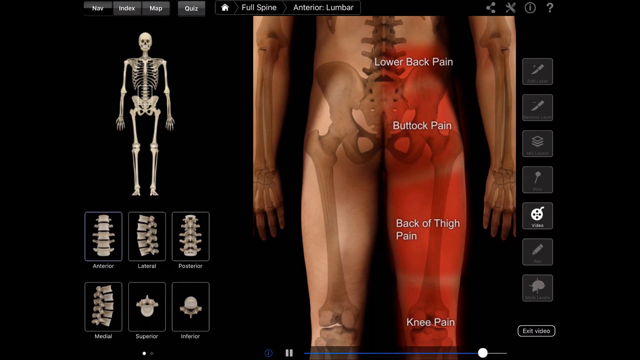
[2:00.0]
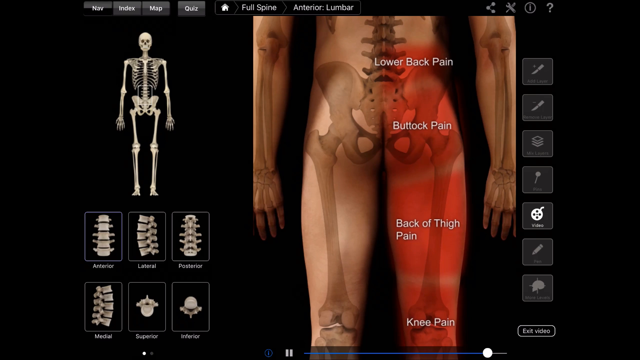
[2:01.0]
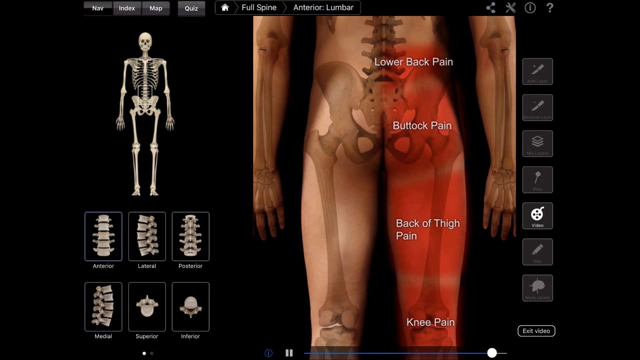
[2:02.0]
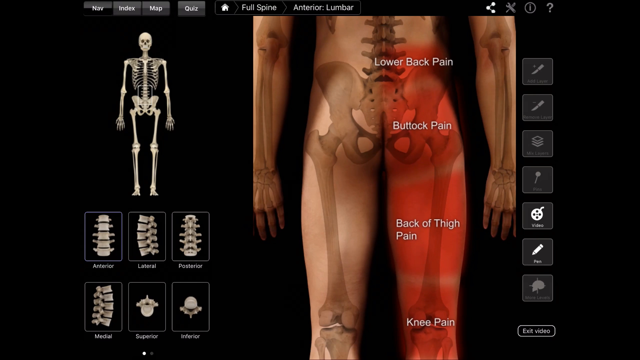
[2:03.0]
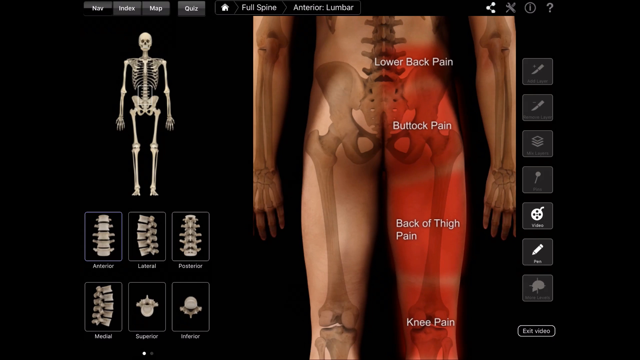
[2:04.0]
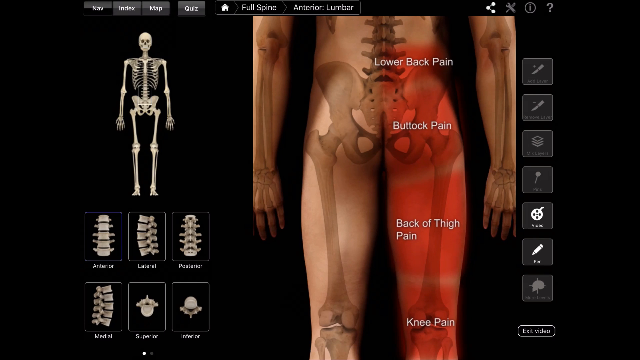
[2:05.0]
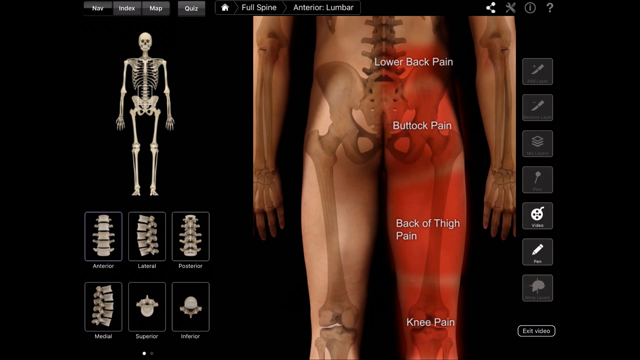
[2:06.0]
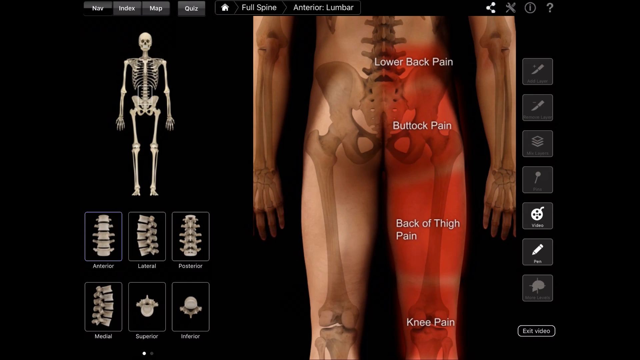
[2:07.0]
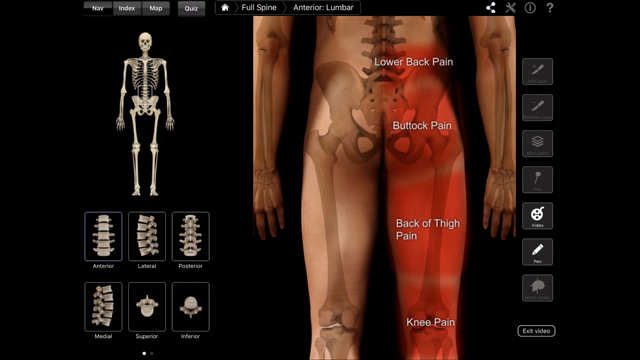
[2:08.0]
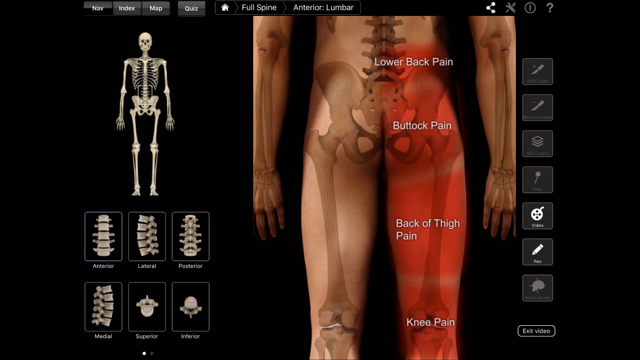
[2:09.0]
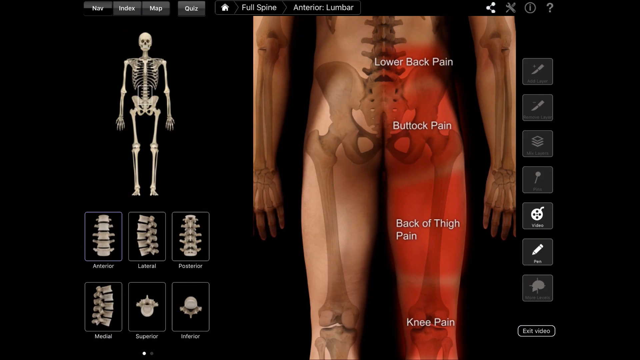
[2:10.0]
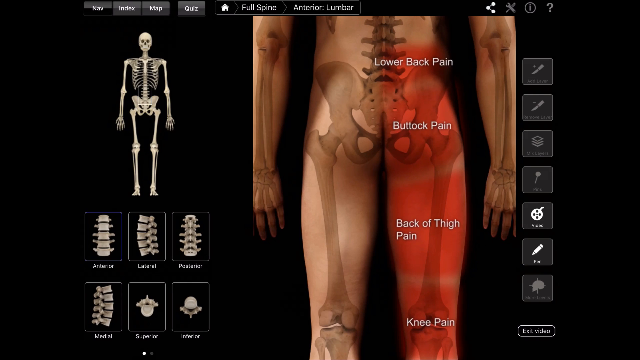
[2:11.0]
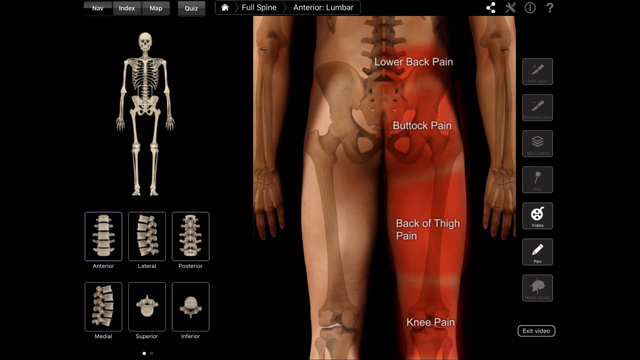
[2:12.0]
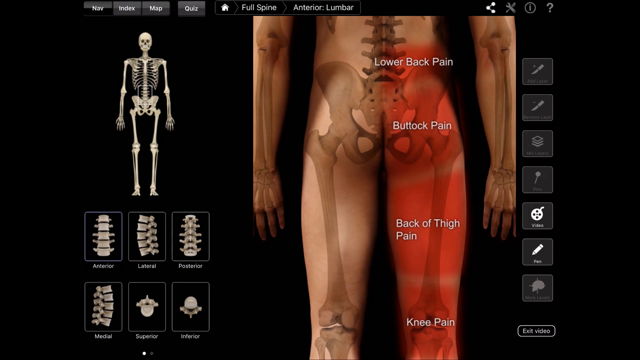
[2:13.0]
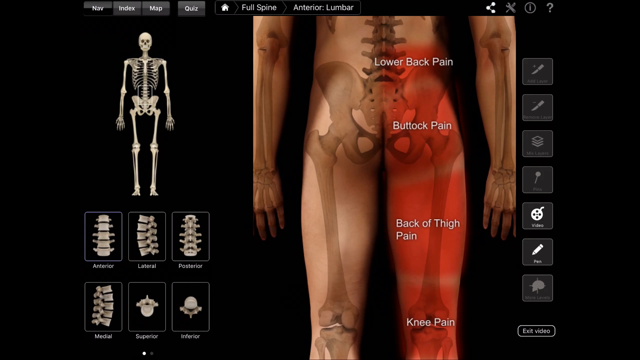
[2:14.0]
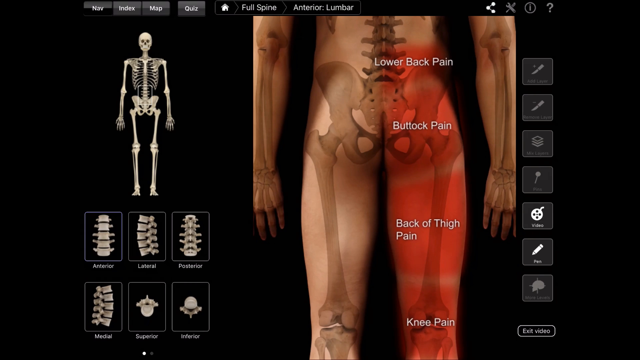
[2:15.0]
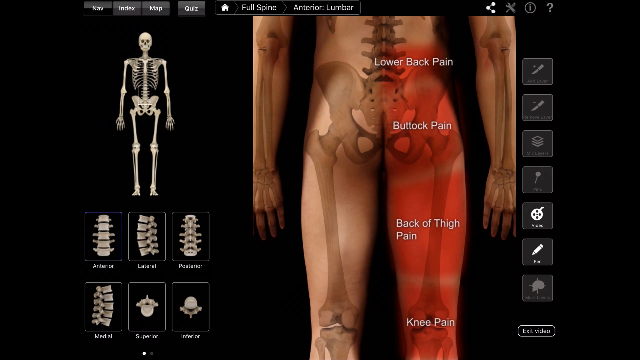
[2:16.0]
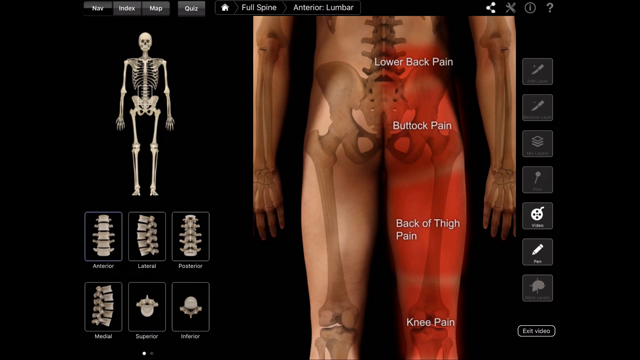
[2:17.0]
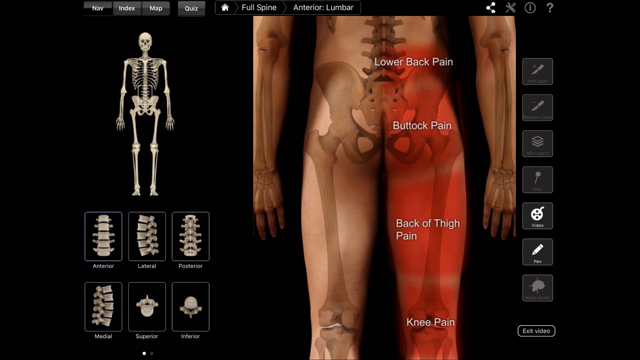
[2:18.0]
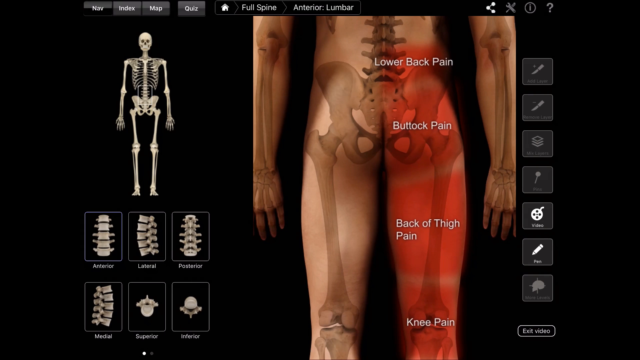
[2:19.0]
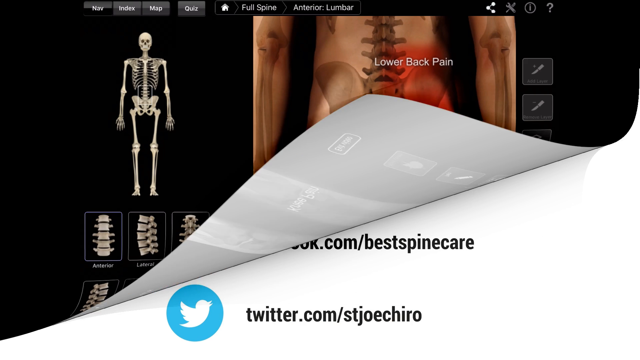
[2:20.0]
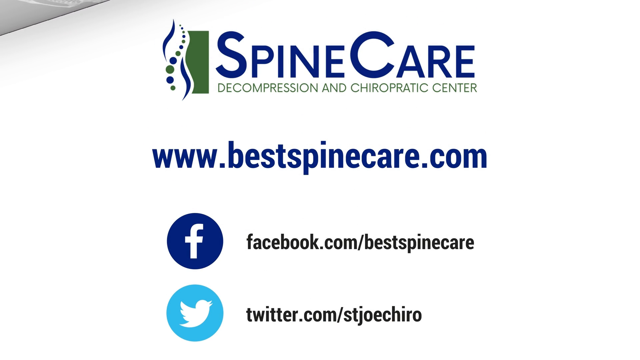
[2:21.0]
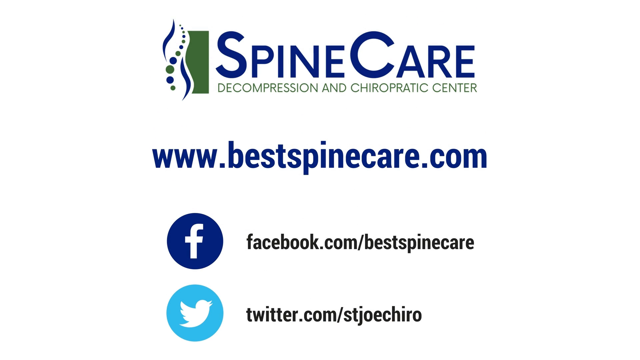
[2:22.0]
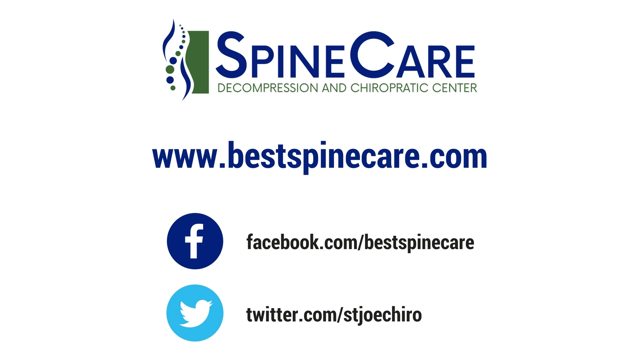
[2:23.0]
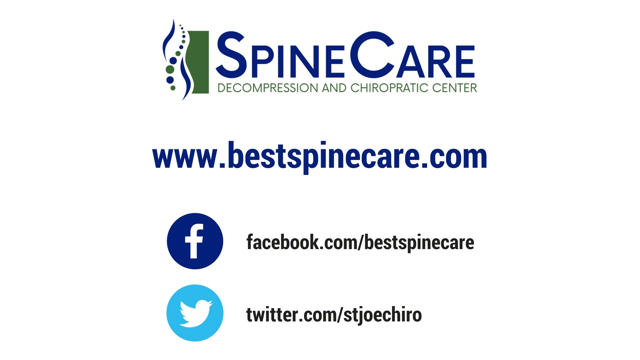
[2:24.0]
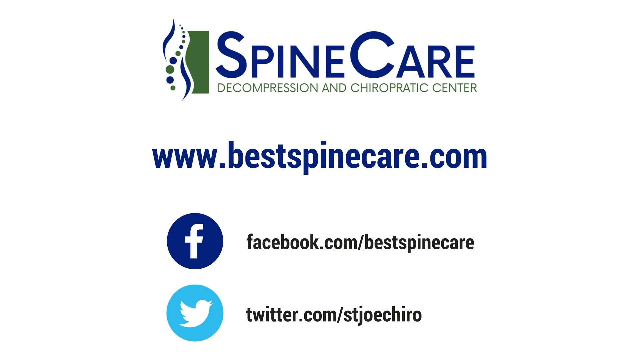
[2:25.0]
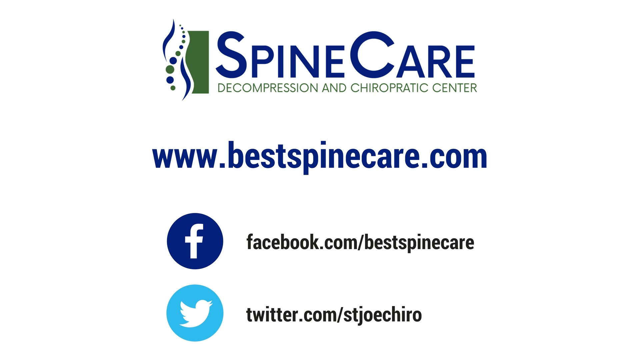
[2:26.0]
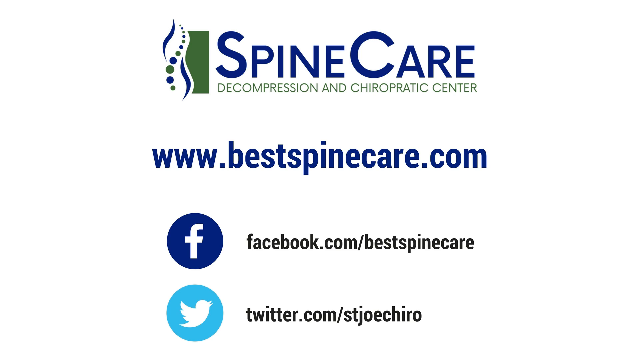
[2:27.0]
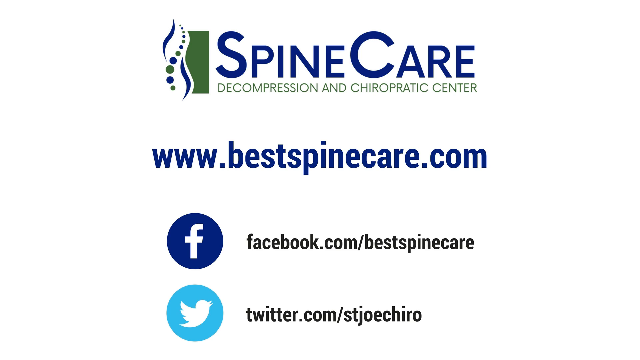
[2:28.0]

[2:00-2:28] The back view remains, showing lower back pain, buttock pain, back of thigh pain and knee pain. The knee pain seems to be at the back of the knee, though it is not specifically labeled as the back. For a few seconds little happens, then an editing effect peels away the image to reveal the details of a decompression and chiropractic center called SpineCare. The website "BestSpineCare.com" is listed, along with a Facebook URL and a Twitter handle.